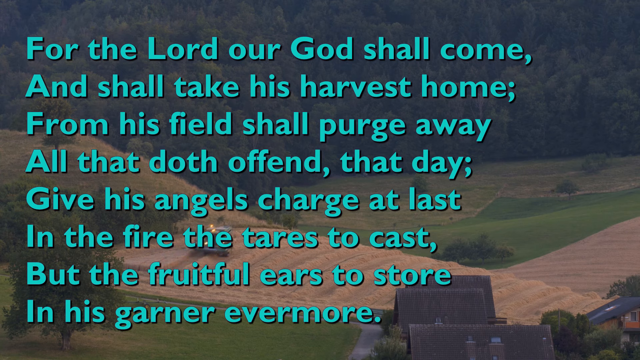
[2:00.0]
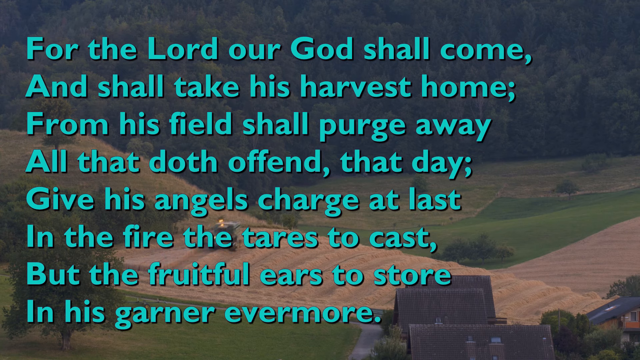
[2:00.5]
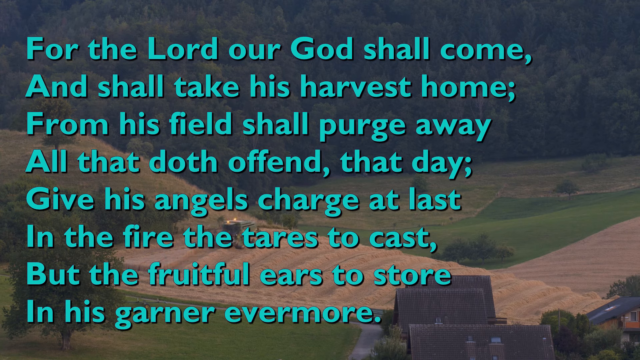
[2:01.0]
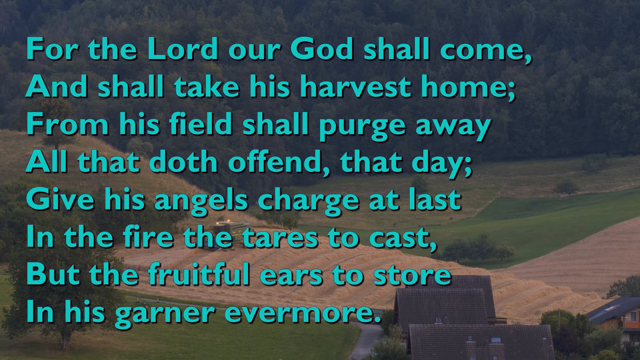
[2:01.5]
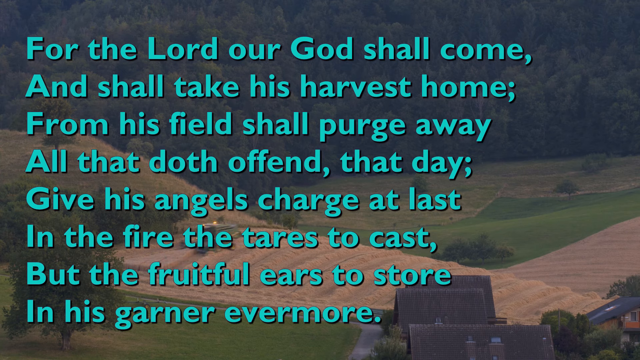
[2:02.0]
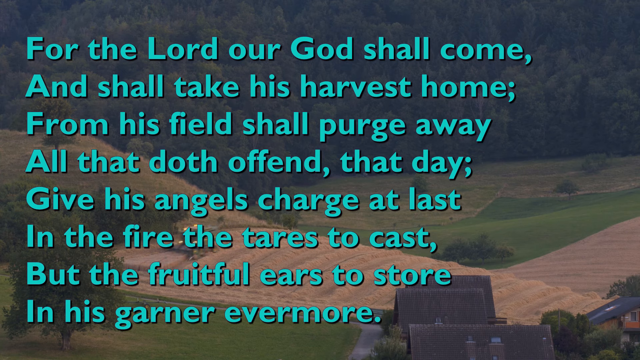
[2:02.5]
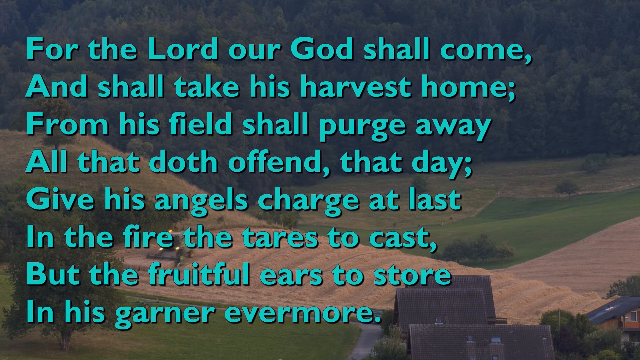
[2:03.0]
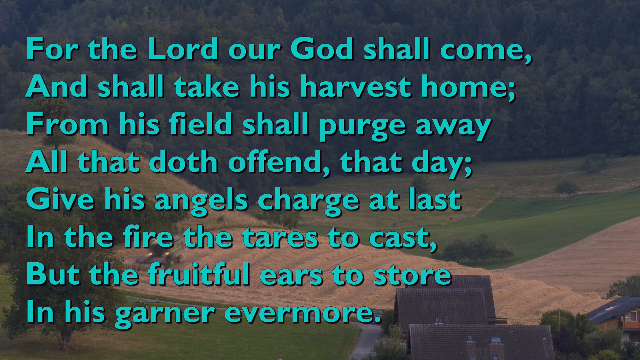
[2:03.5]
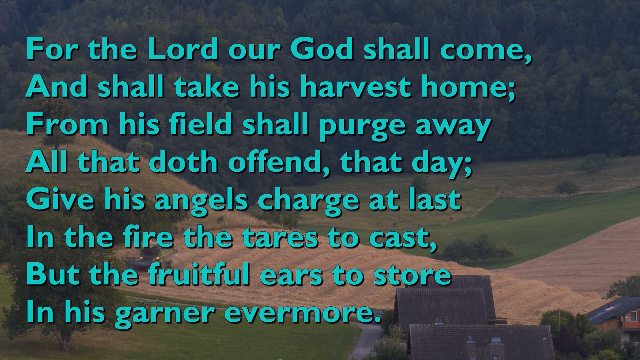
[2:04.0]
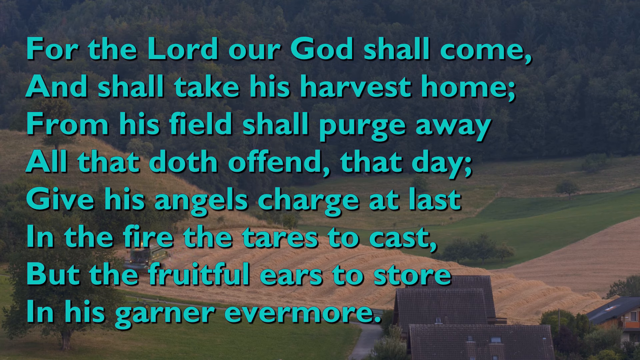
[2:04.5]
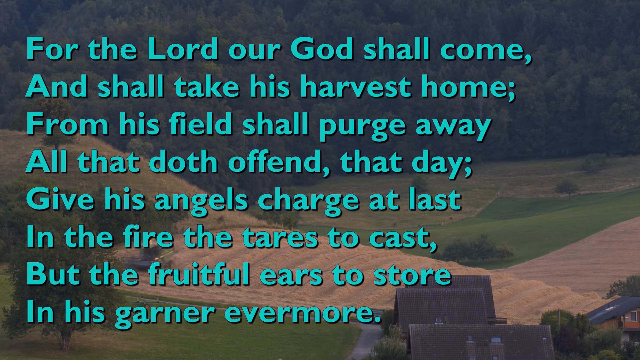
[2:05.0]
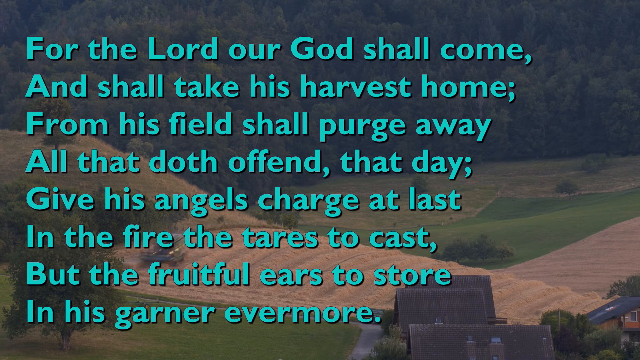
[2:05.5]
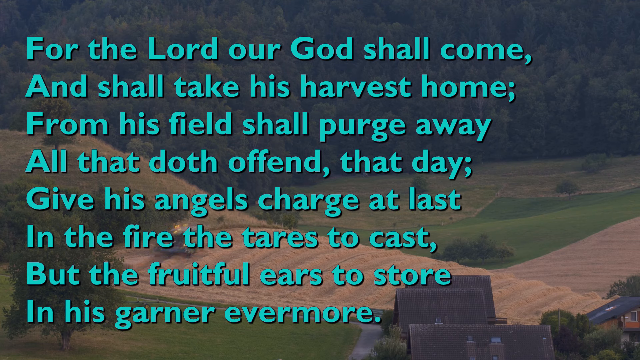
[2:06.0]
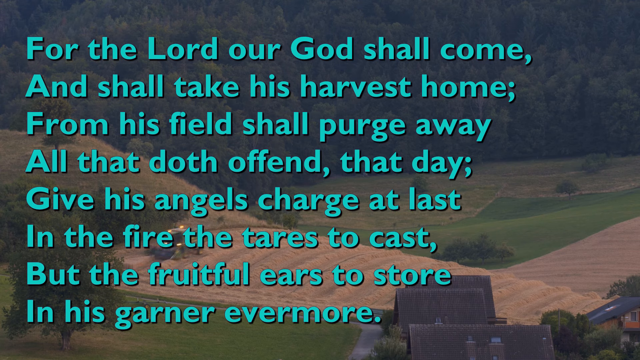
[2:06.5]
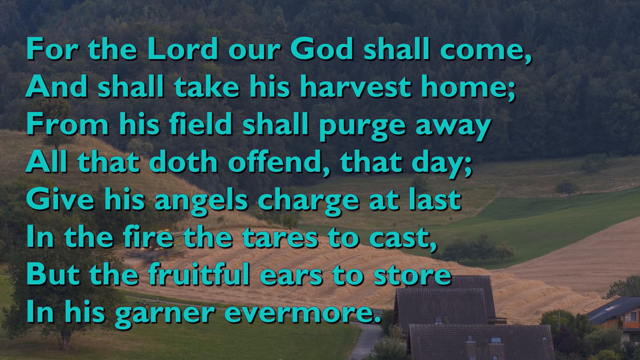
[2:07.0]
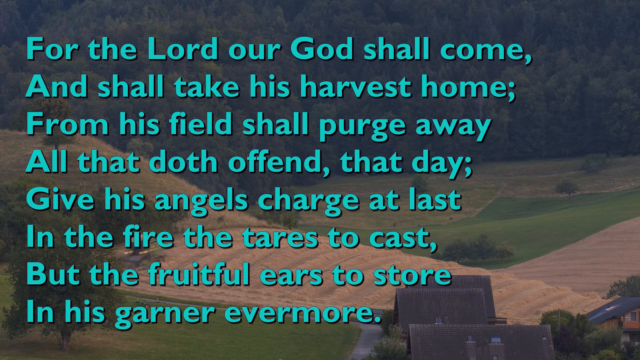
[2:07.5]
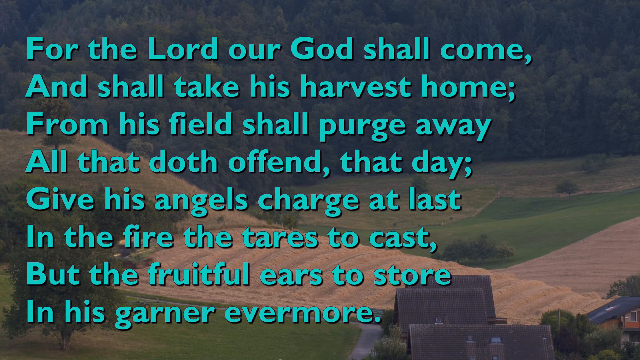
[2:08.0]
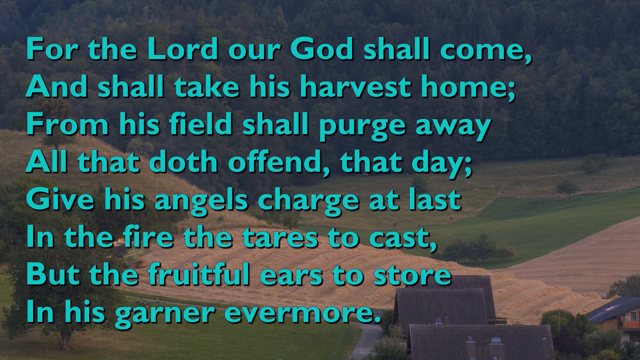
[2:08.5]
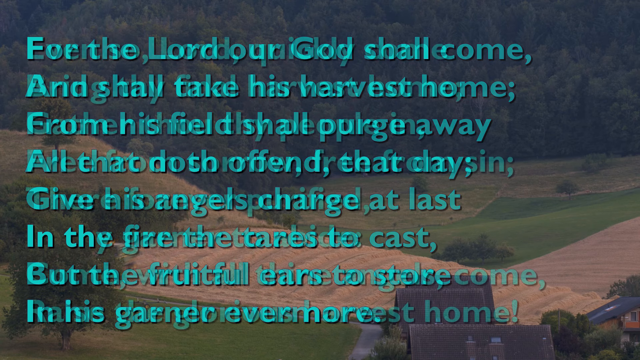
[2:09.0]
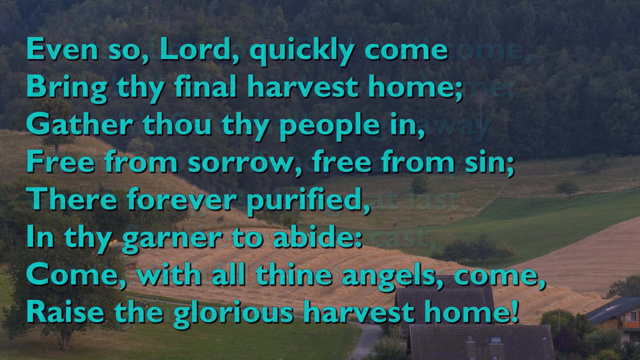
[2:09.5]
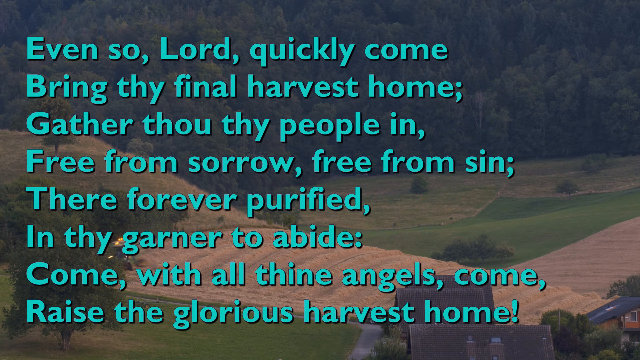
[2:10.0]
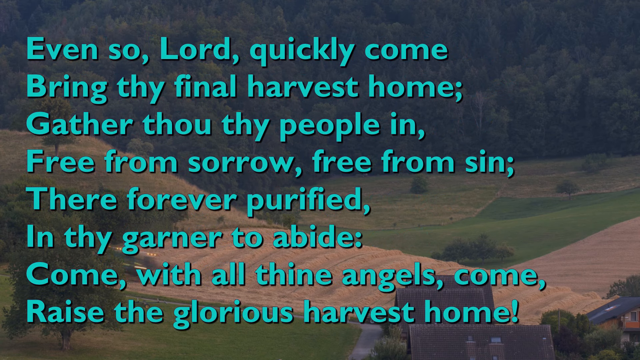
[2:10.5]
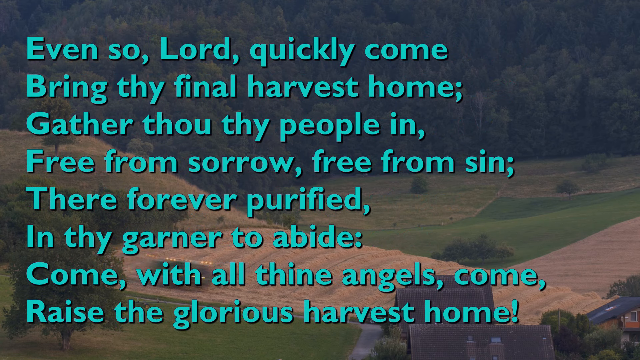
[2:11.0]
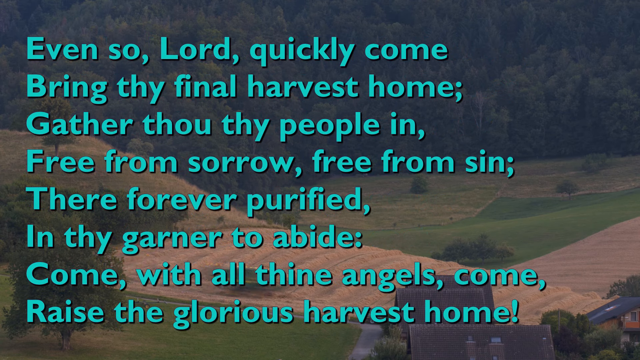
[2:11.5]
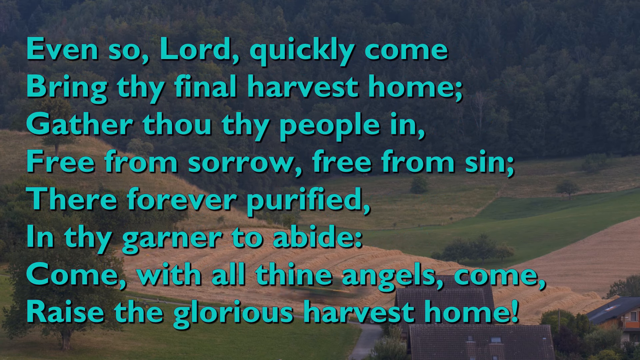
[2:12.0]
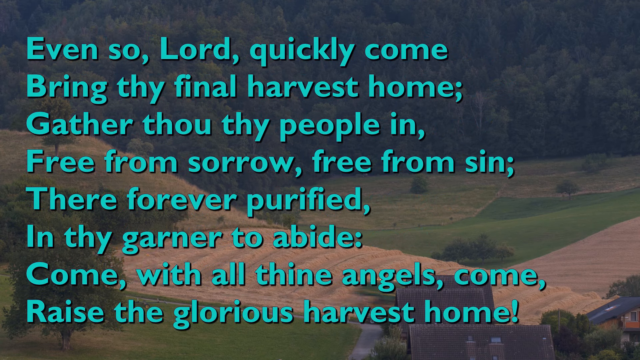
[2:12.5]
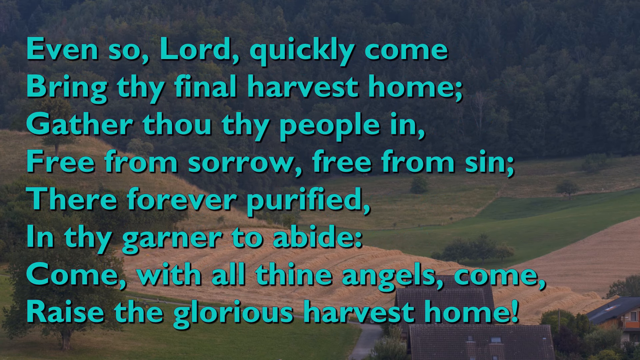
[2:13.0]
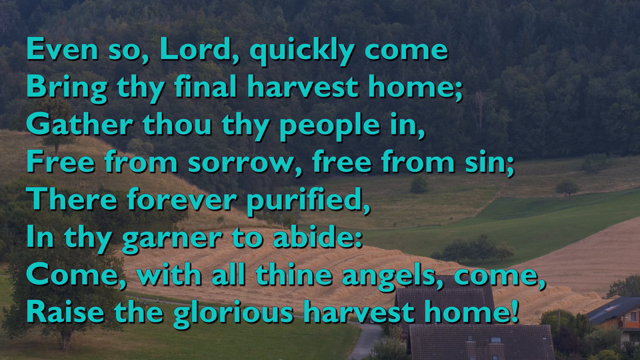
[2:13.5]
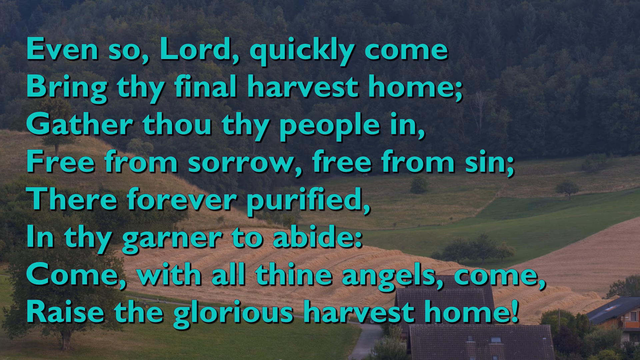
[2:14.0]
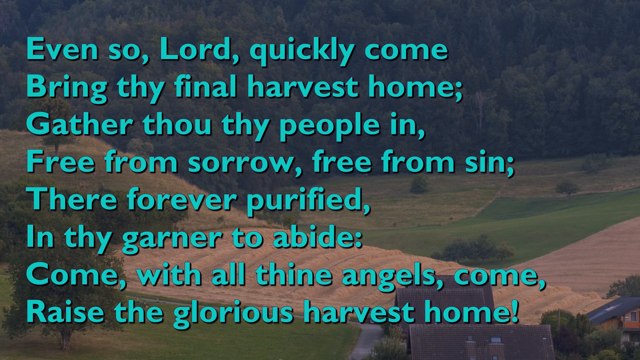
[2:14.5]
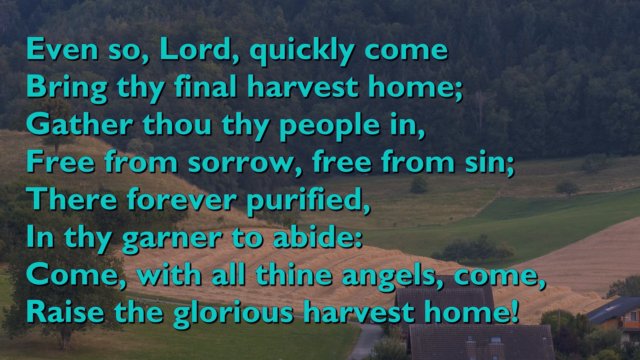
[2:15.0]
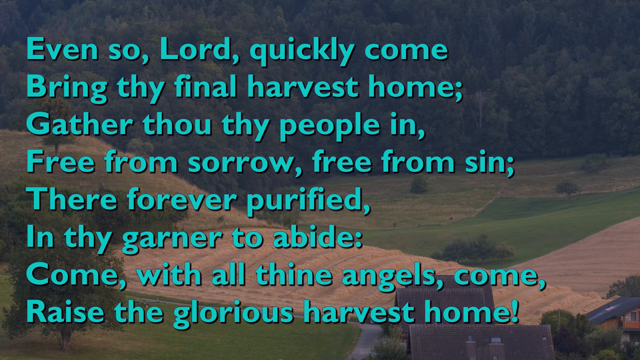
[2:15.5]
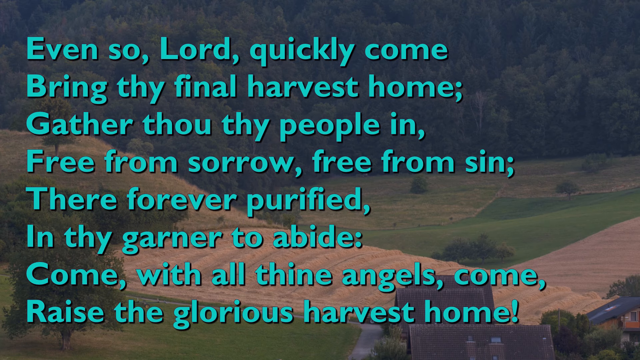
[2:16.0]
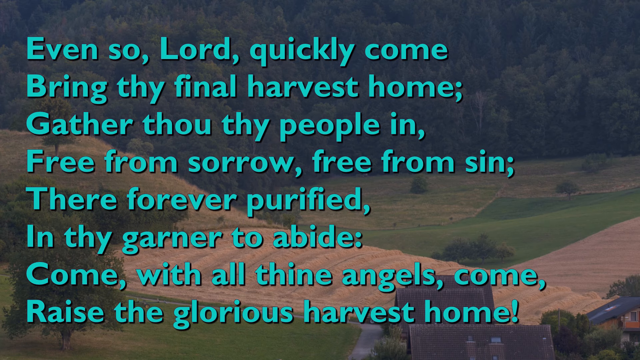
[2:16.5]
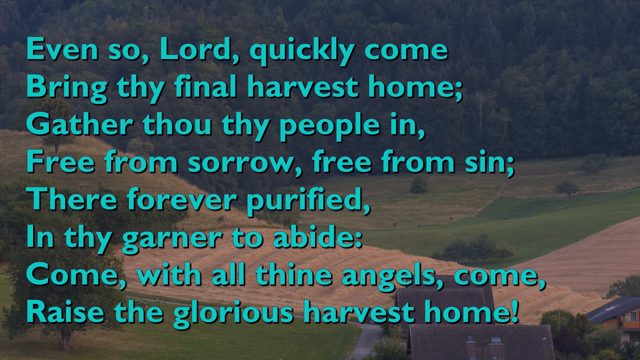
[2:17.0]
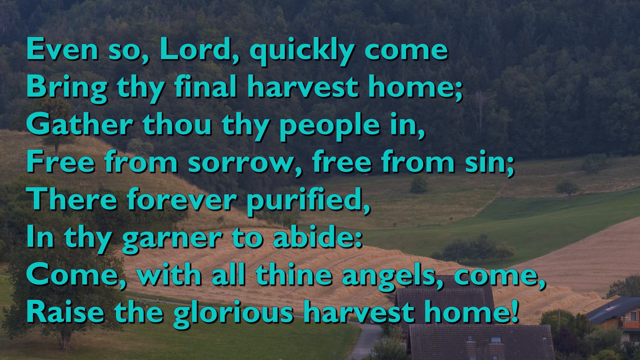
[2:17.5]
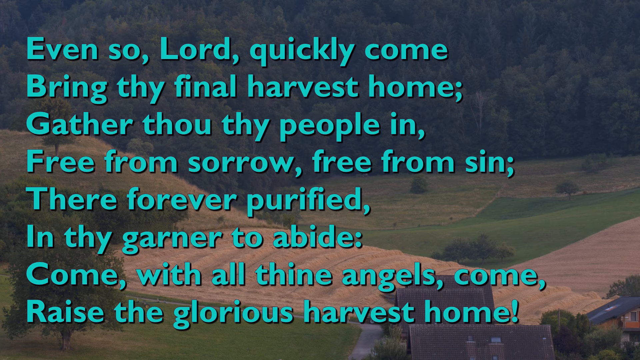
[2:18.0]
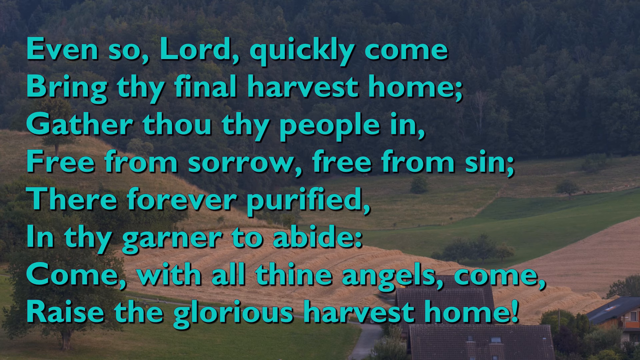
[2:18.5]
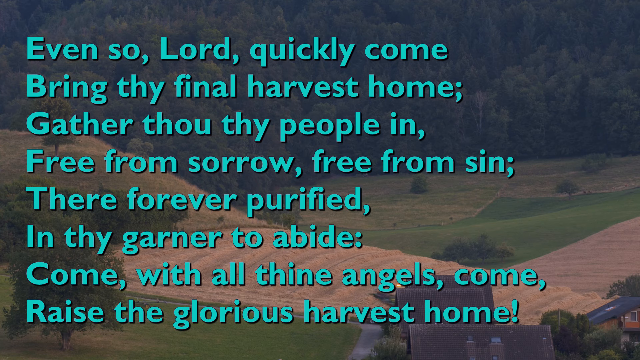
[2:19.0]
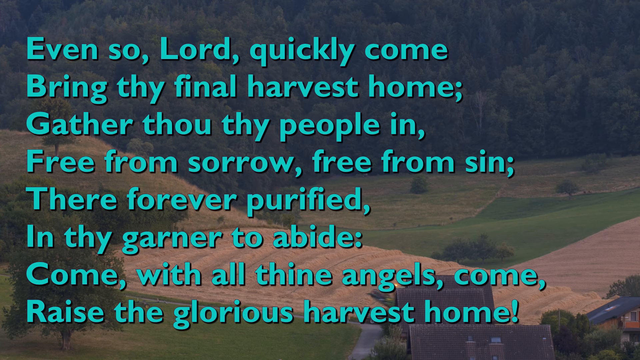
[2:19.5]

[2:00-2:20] In the bottom right-hand corner of the screen are the rooftops of two small houses. In front of them is a wheat field with a small green machine cutting layers of the wheat. Past the wheat field is a perfectly manicured dark green yard, and past that more grass that is a less dark mixture of tan and light green. In the background are tall green evergreen trees, a very wooded area. A single grassy hill has a tree on top of it. Across the screen the text reads: "For the Lord our God shall come and shall take this harvest home. From his field shall purge away all that doth offend that day. Give his angels charge at last in the fire the tares to cast." Then it switches to another screen, written in turquoise green, that reads: "Even so, Lord, quickly come, bring thy final harvest home, gather thou thy people in, free from sorrow, free from sin, there forever purified, in thy garner to abide, come with all thine angels, come, raise a glorious harvest home."